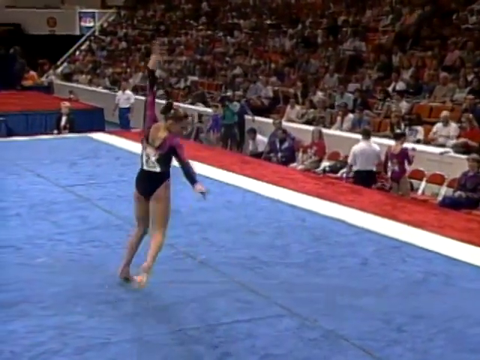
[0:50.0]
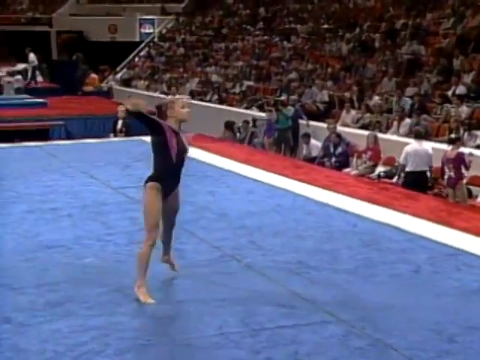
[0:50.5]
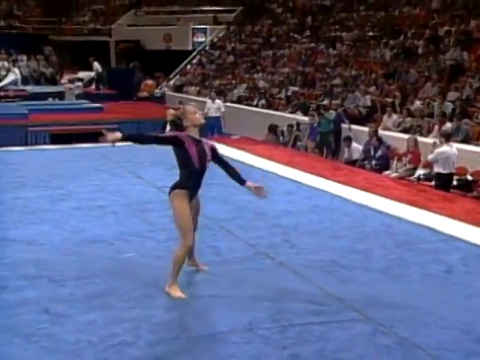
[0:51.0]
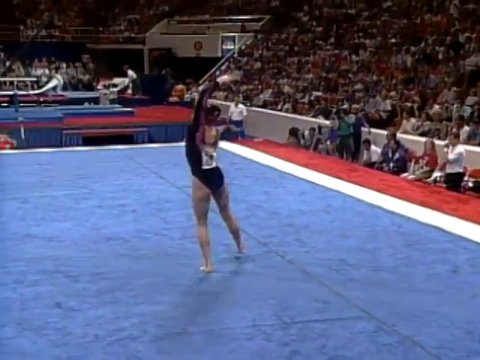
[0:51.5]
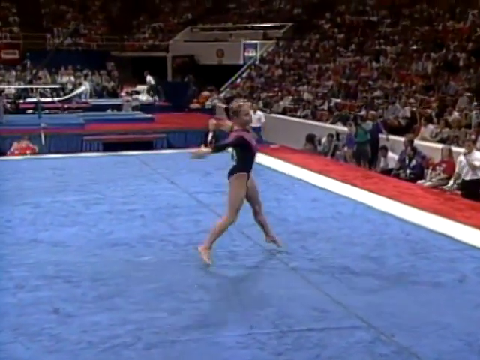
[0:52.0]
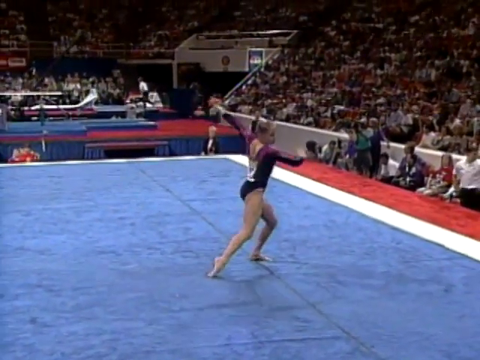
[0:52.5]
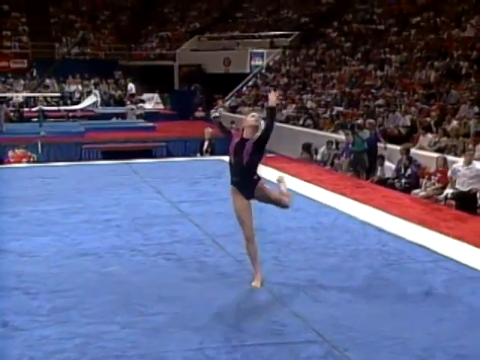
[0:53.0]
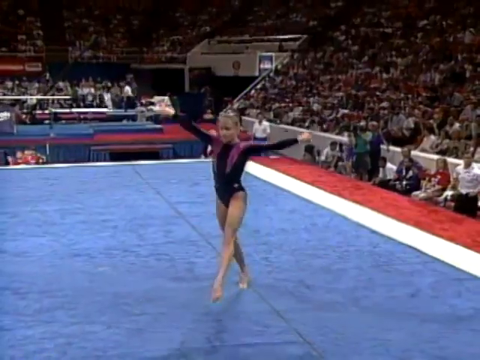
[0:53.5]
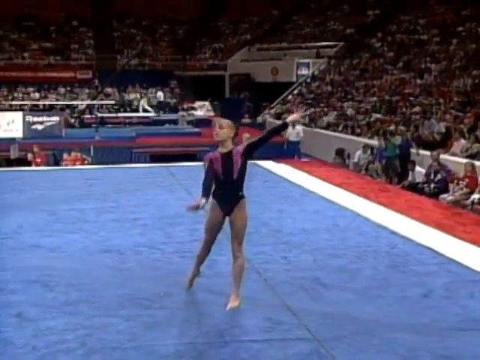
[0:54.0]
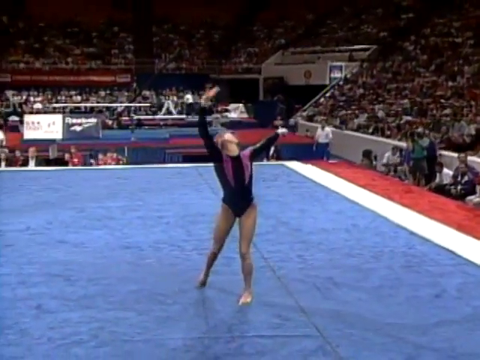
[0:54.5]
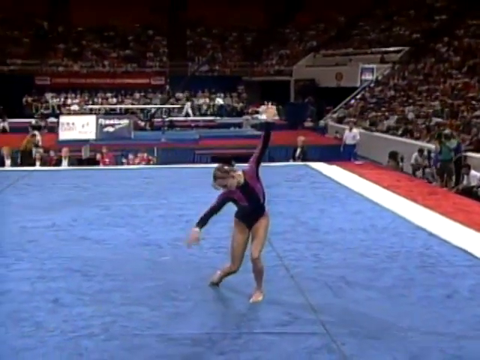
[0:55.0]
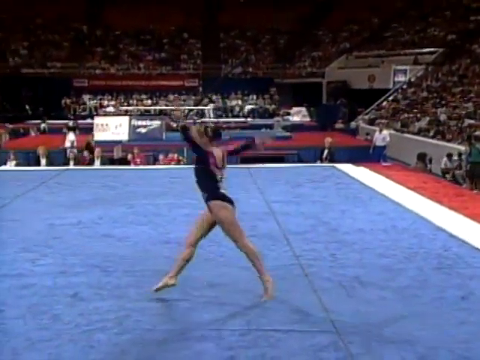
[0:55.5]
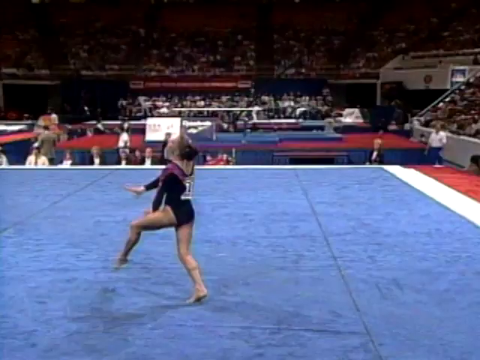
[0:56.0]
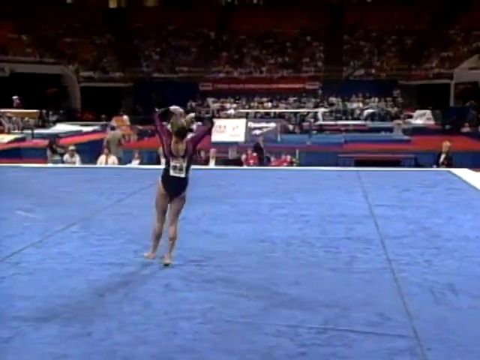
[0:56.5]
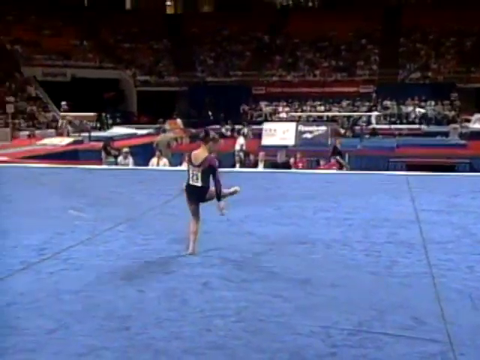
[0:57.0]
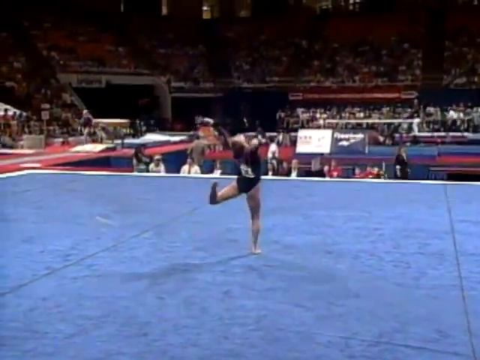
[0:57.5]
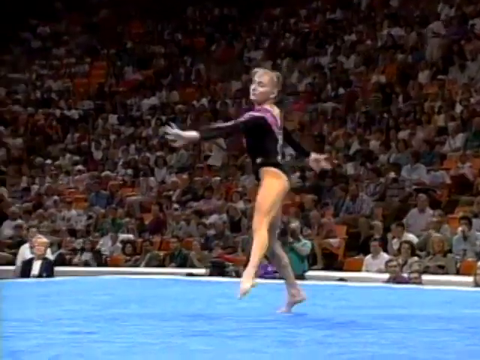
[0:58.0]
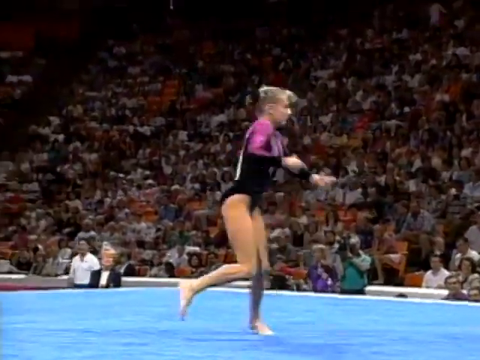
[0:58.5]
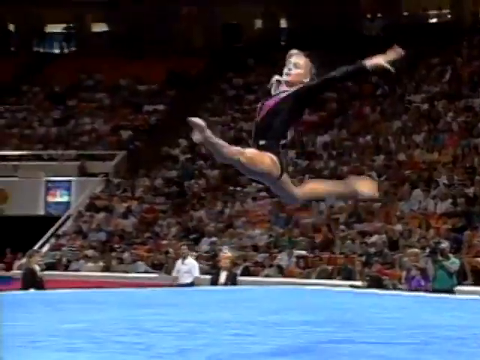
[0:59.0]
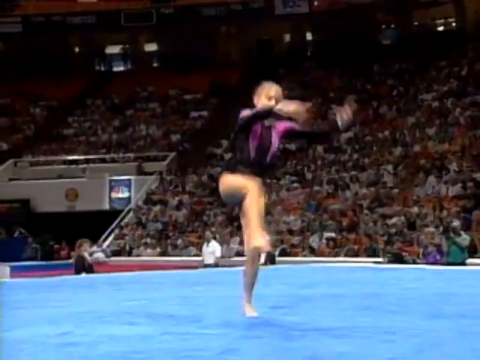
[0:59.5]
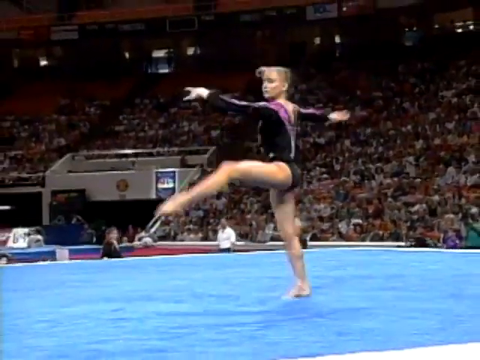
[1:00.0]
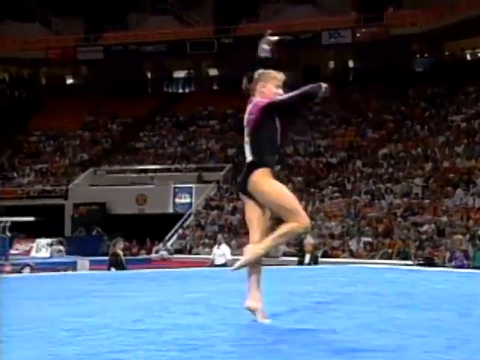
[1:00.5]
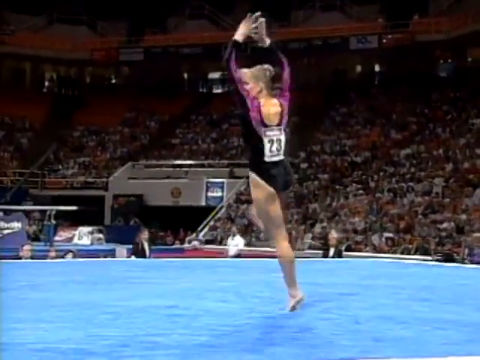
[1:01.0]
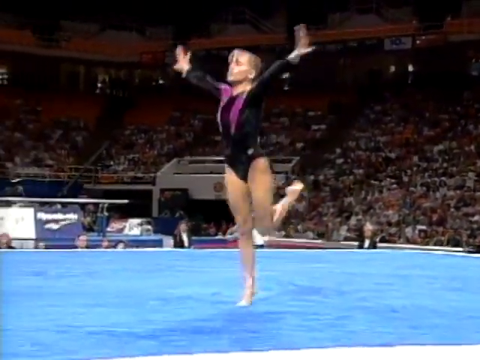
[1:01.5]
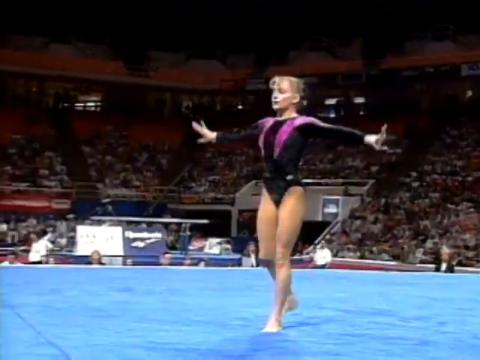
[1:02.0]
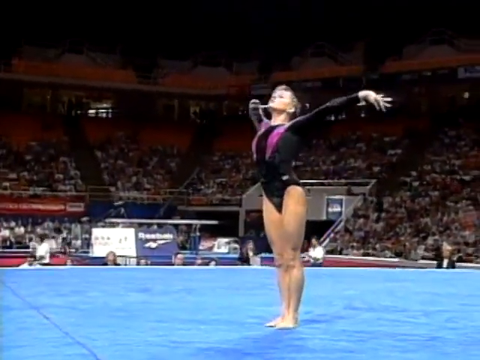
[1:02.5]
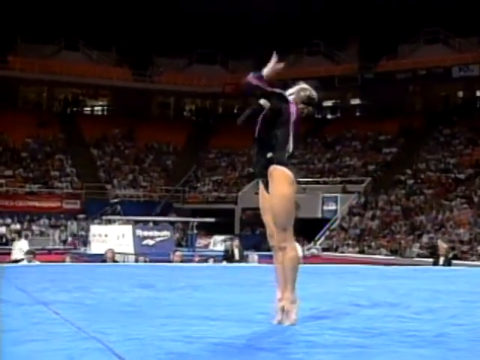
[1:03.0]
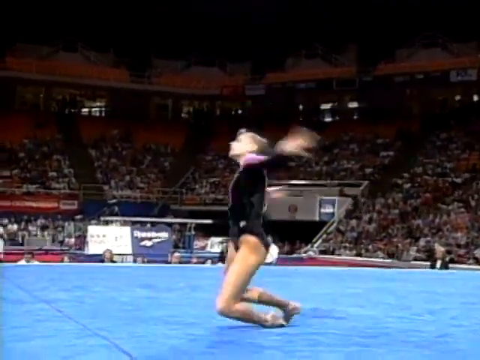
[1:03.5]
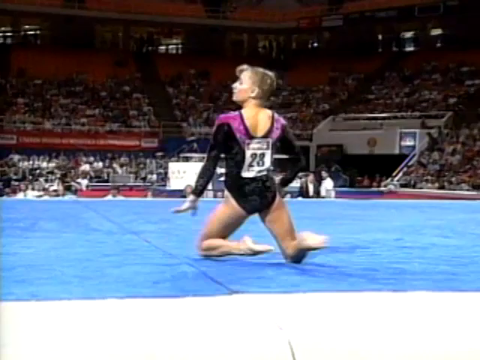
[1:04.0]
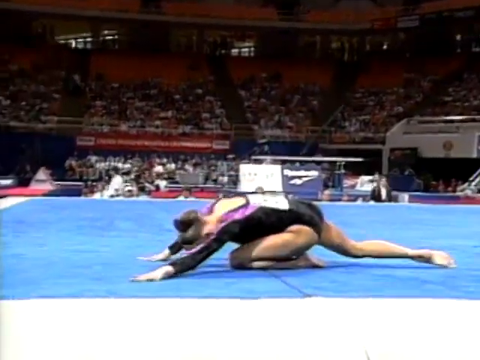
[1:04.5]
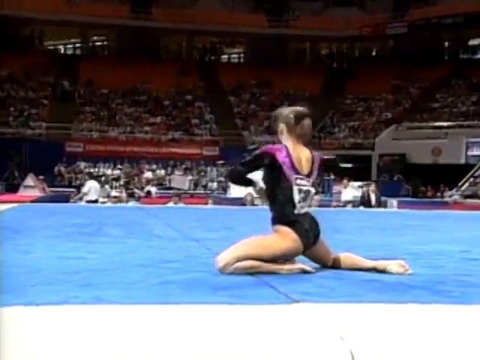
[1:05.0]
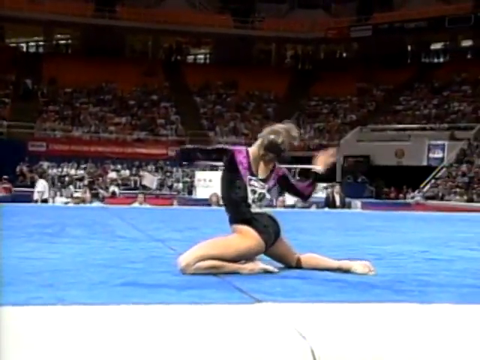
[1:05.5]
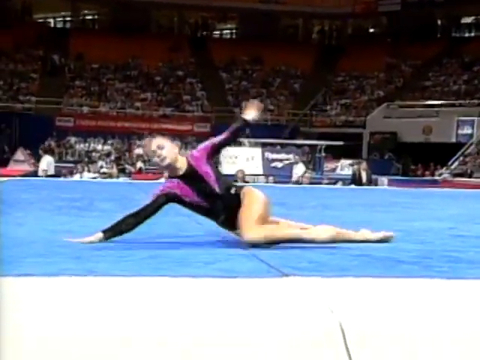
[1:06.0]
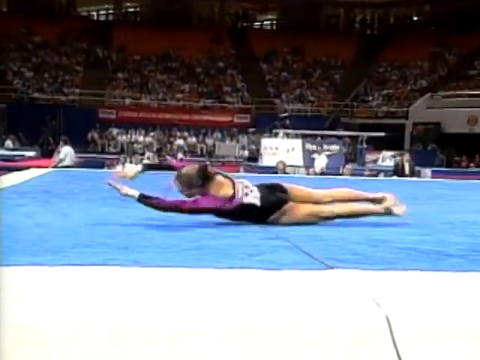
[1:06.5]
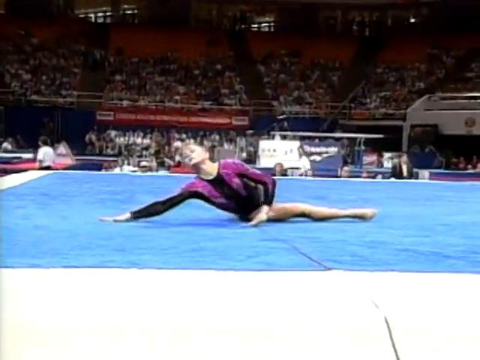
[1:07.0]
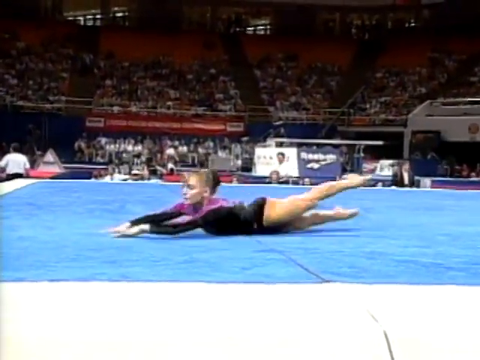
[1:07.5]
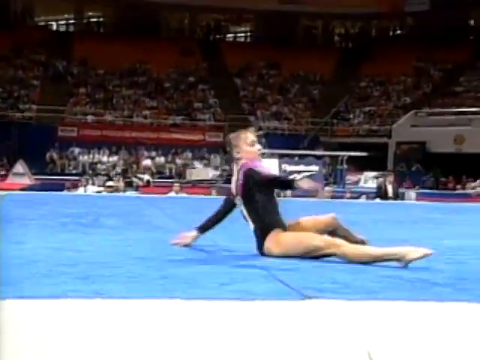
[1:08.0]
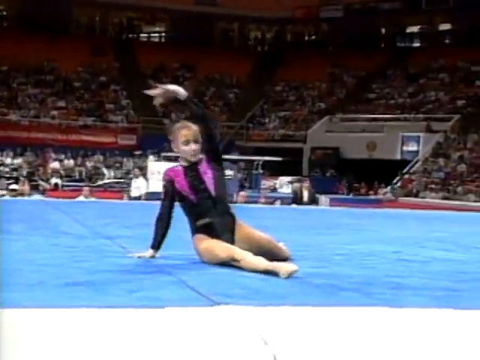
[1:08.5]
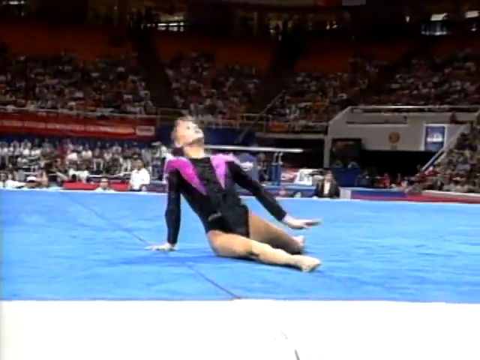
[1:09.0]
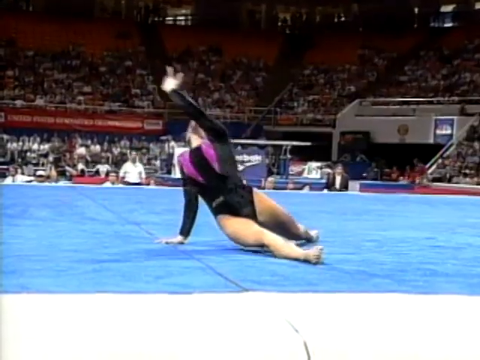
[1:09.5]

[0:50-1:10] A gymnast performs at what appears to be a very popular event, as the stands behind her are very full; the seats are orange and not many are empty. She wears a black leotard with some purple in it and has her hair tied up. She is on a big, square blue mat with a thick white outline. As part of her routine she strikes different poses and dances around the mat, does spin kicks and spins around. She gets on the ground, poses there and rolls, showing off a little as she continues her routine.